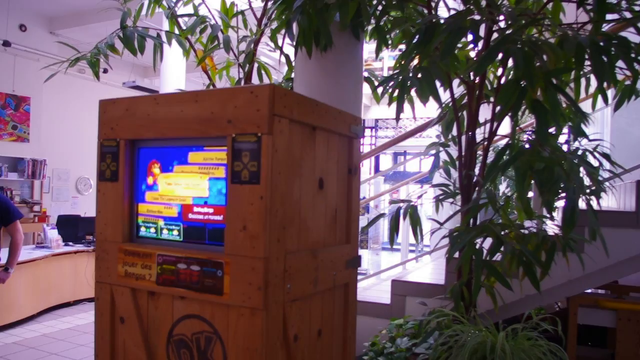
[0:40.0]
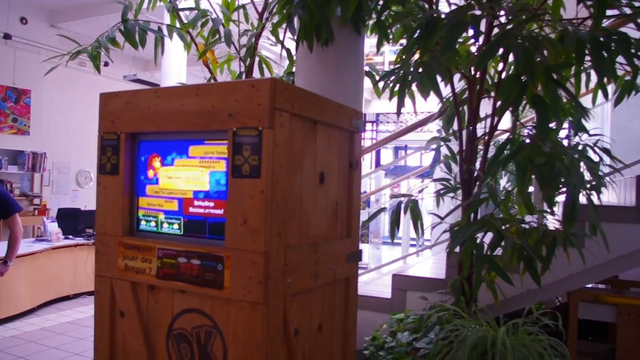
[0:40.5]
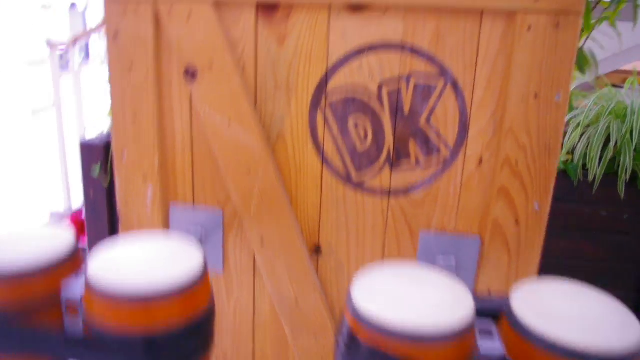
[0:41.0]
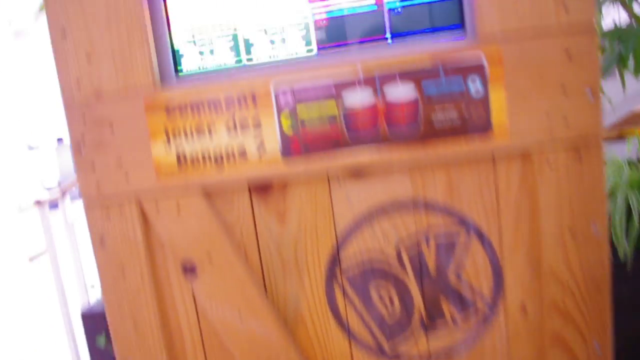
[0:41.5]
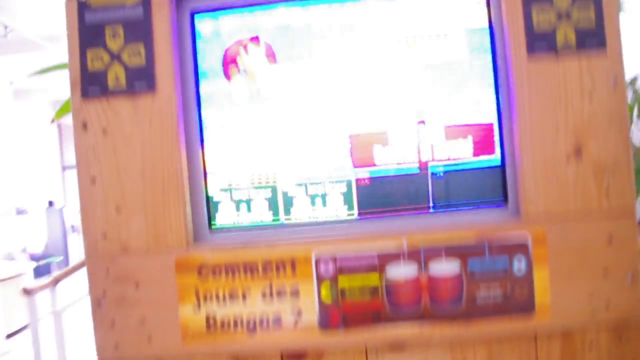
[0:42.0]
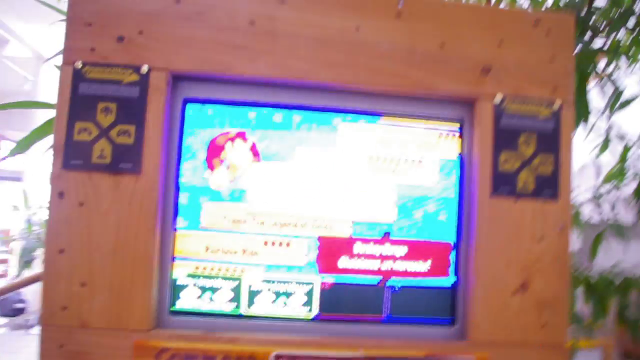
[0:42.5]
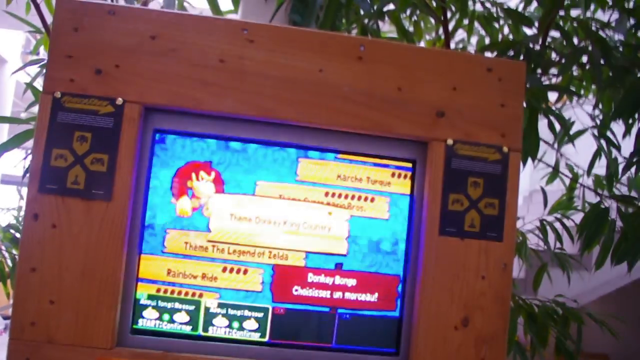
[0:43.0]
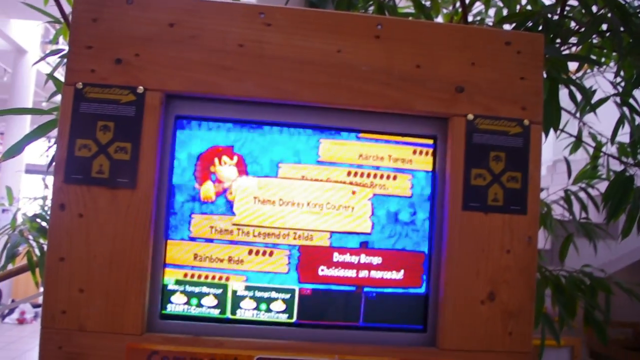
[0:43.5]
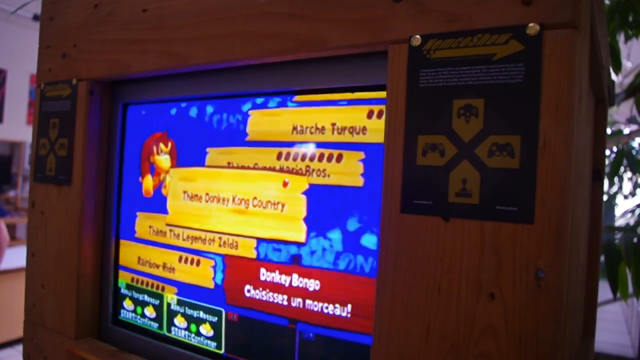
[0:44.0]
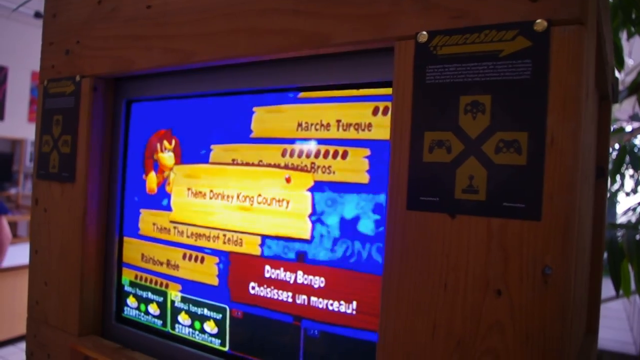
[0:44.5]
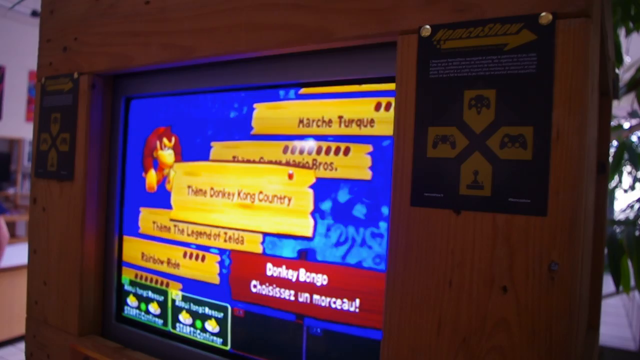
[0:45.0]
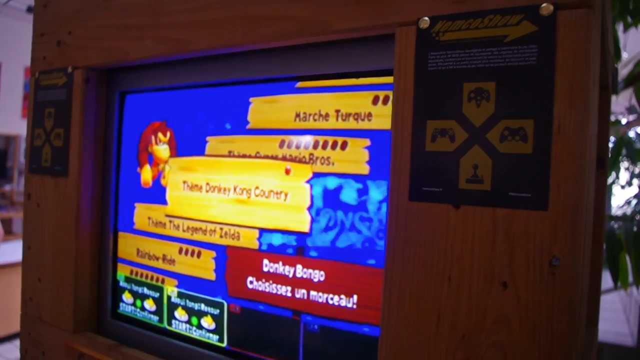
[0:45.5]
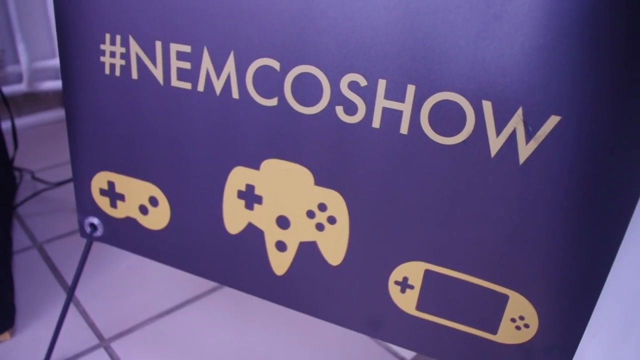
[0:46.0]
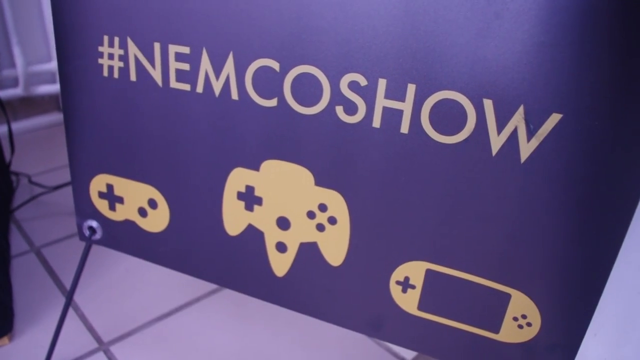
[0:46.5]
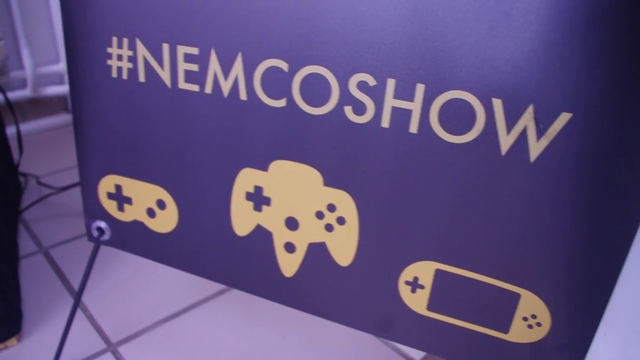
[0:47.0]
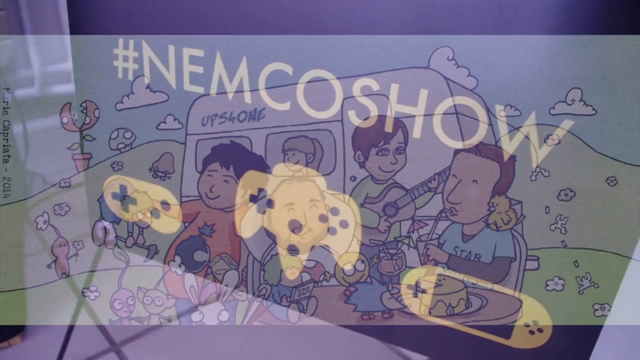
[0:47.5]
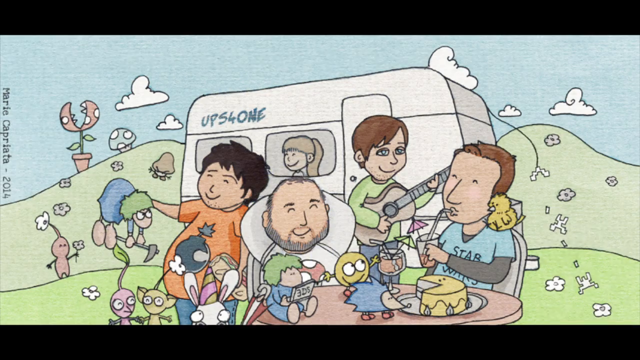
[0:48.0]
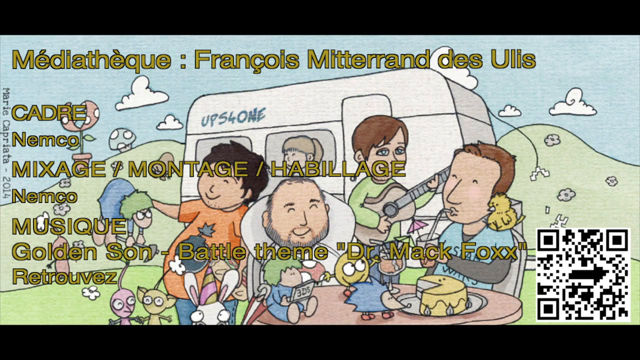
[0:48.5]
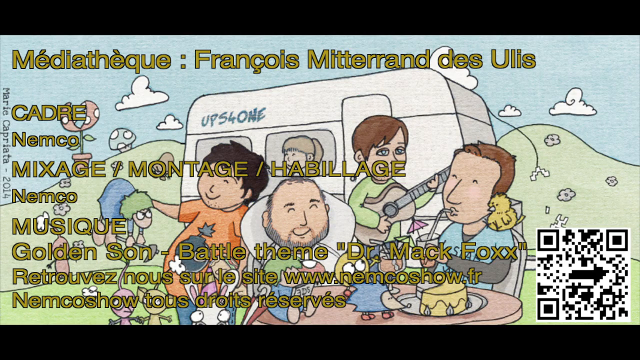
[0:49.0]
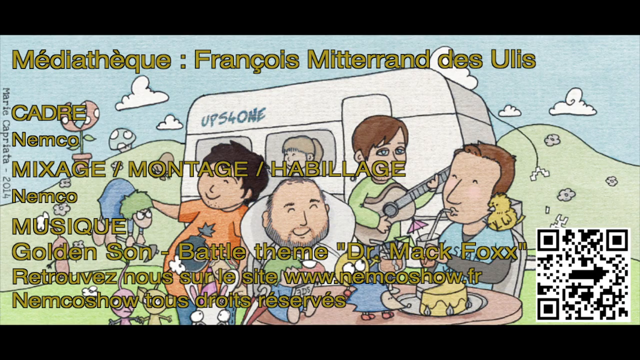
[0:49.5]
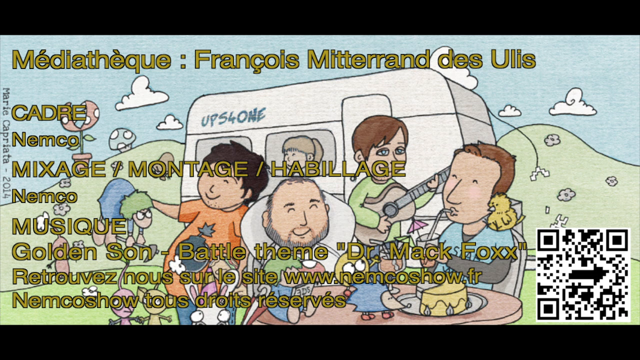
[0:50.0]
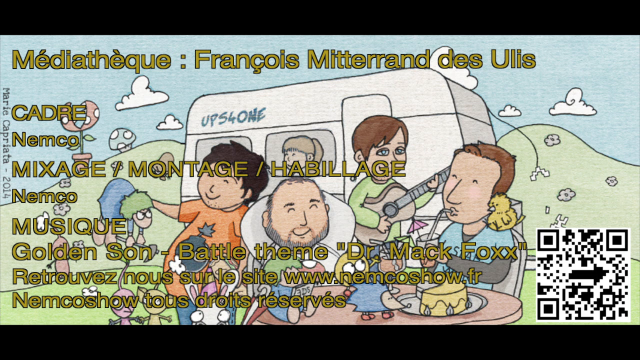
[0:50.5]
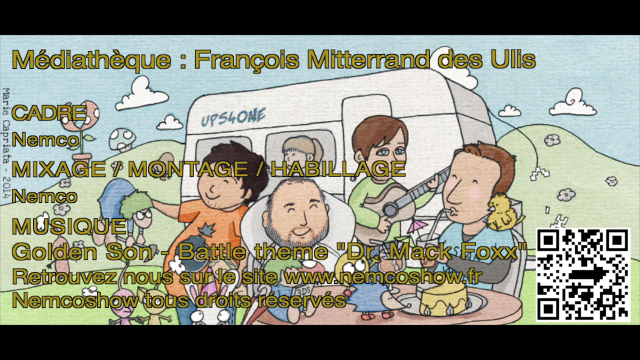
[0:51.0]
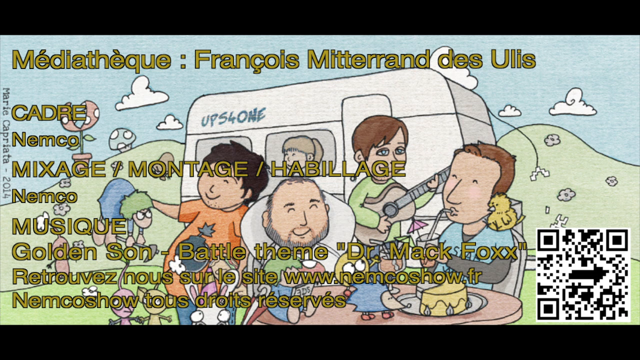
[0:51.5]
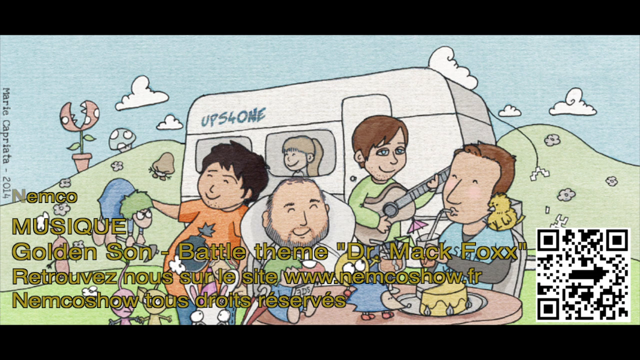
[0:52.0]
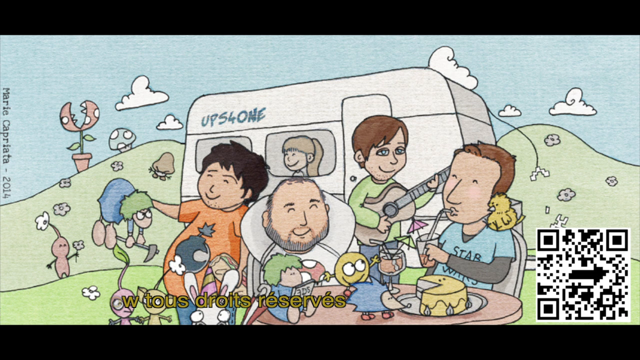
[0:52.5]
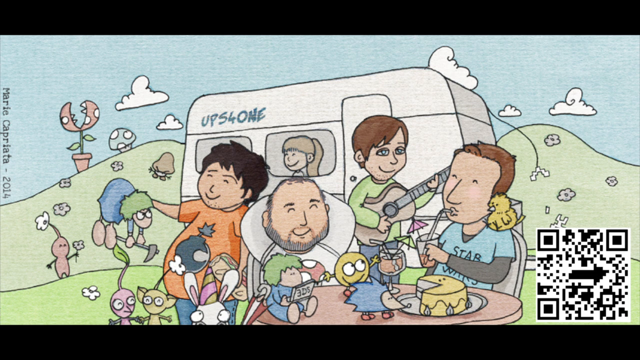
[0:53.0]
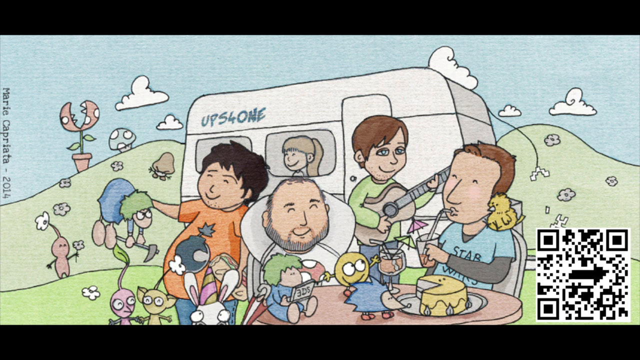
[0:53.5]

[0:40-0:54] The camera pans over to what looks like someone's custom-made Donkey Kong cabinet, with a screen displaying an unidentified Donkey Kong game. It then pans to a banner with what looks like a hashtag, possibly for an event at the museum, reading "Nemco Show". The banner shows three video game controllers: one looks like a NES controller, one a Nintendo 64 controller, and the other looks like a Game Boy Advance. Next the camera pans over to someone's artwork, which appears to show human characters hanging out with video game characters, including the Lemmings, Pac-Man, apparently Sonic, and some Pikmin characters. There is an RV behind them with writing on it.